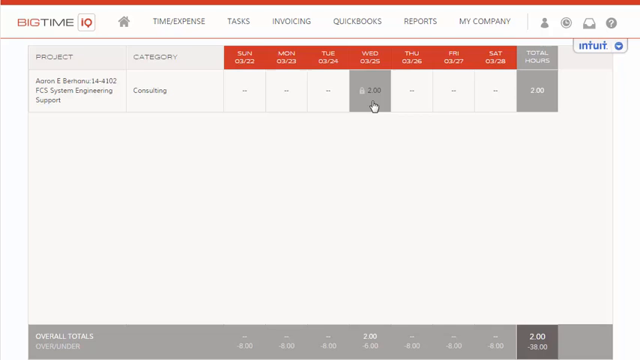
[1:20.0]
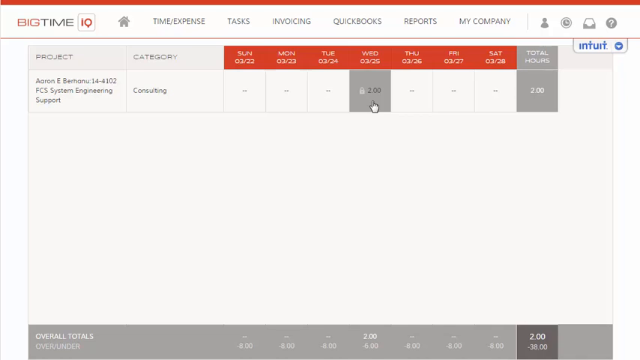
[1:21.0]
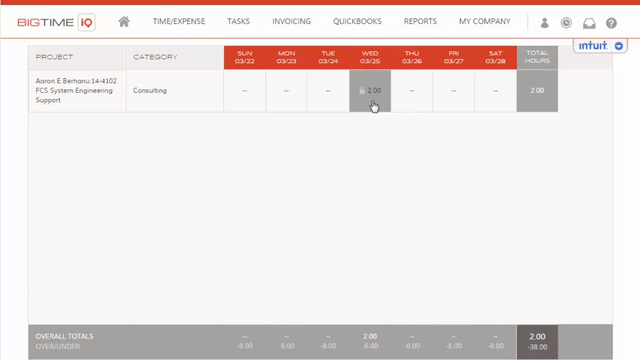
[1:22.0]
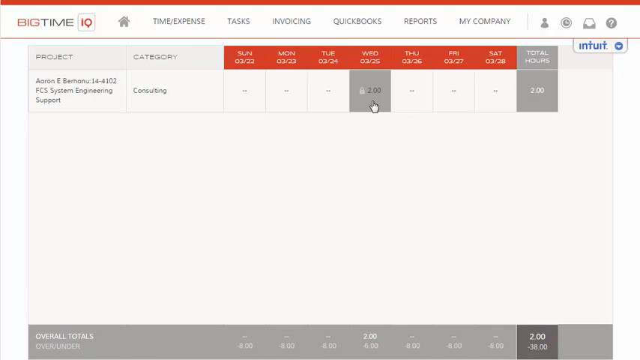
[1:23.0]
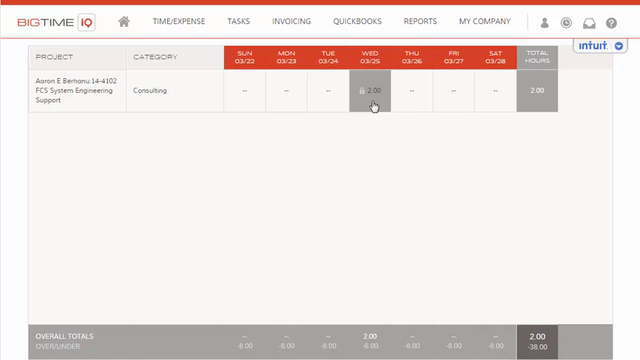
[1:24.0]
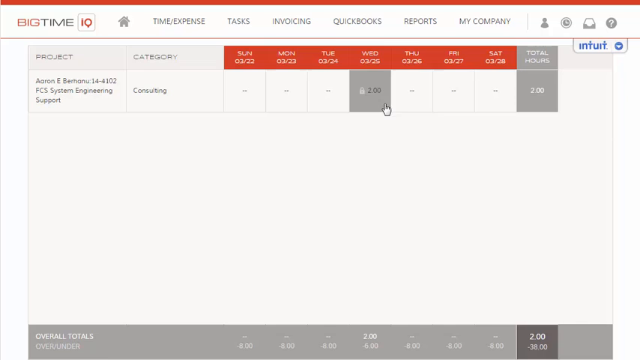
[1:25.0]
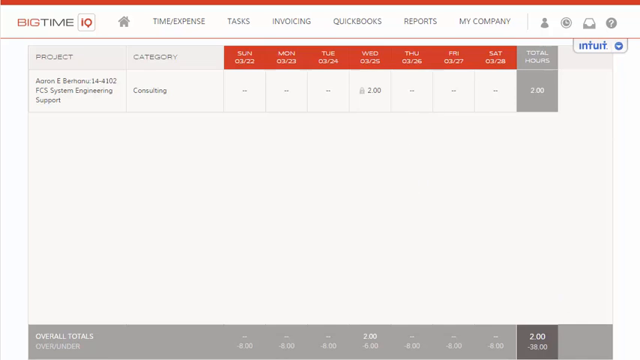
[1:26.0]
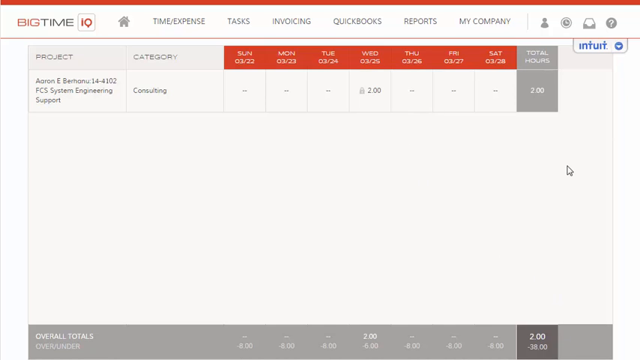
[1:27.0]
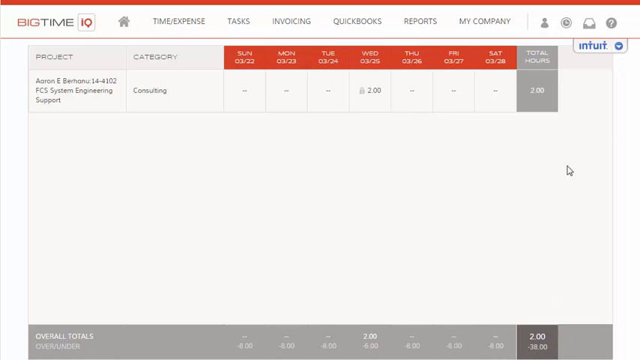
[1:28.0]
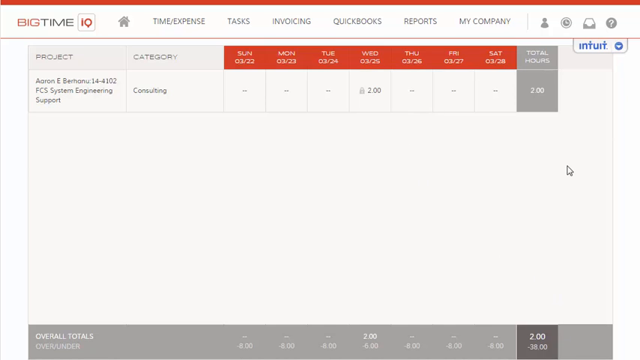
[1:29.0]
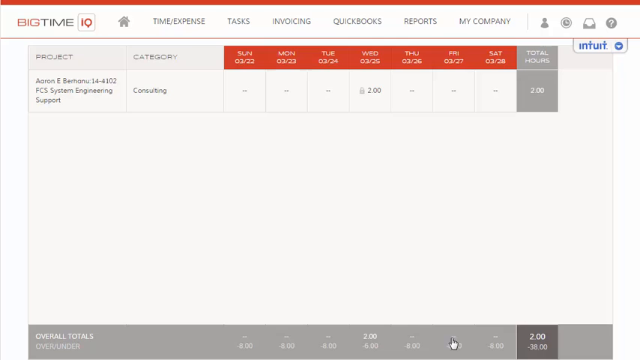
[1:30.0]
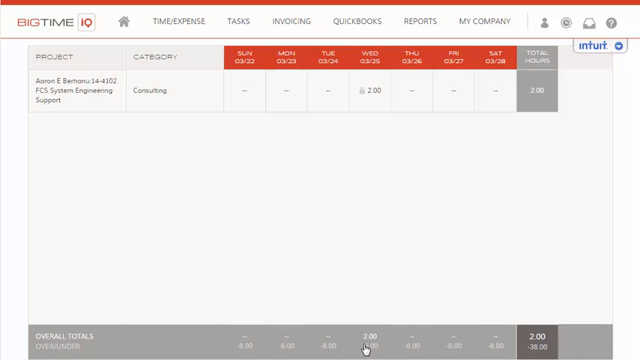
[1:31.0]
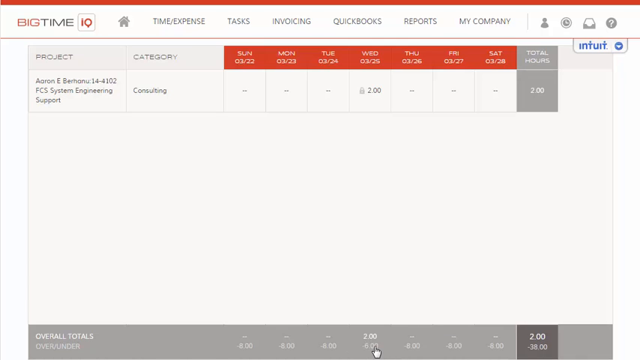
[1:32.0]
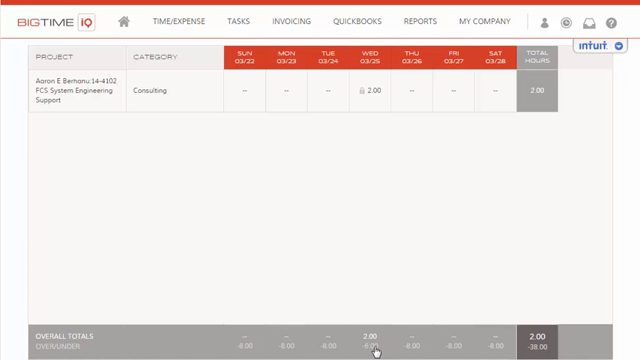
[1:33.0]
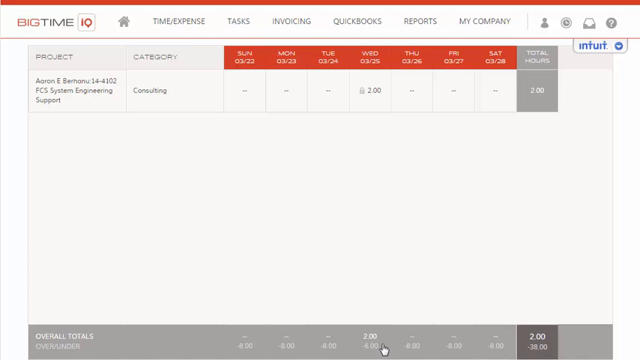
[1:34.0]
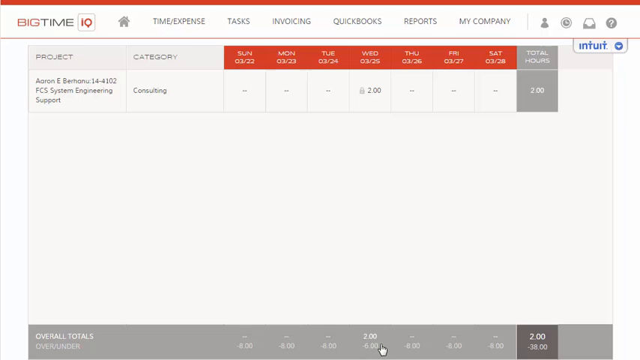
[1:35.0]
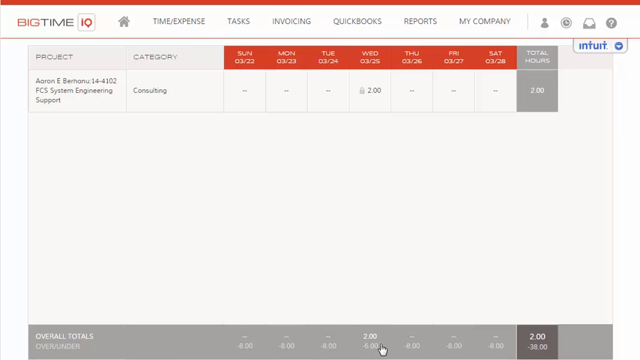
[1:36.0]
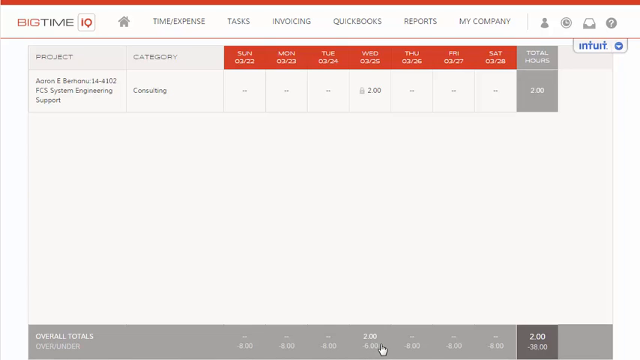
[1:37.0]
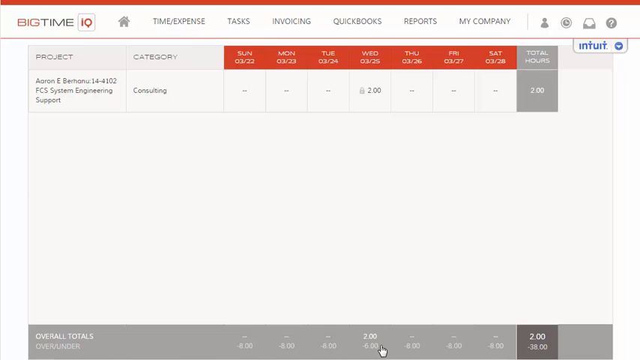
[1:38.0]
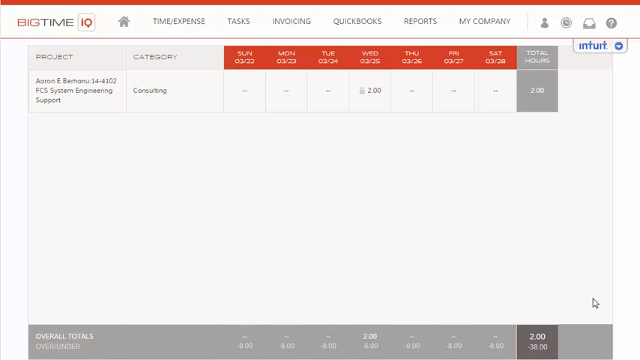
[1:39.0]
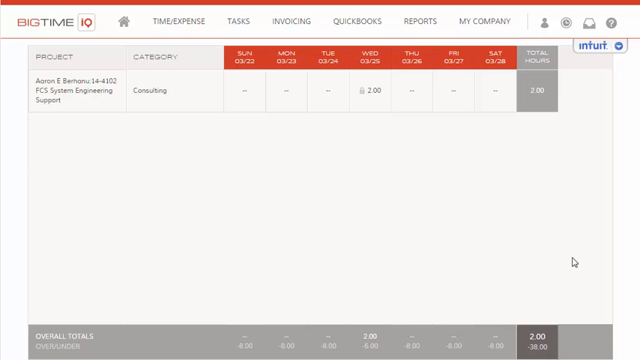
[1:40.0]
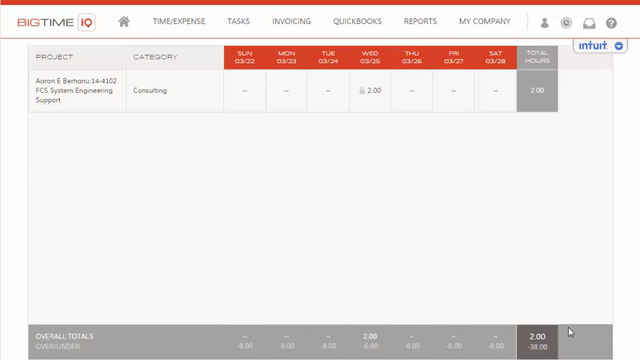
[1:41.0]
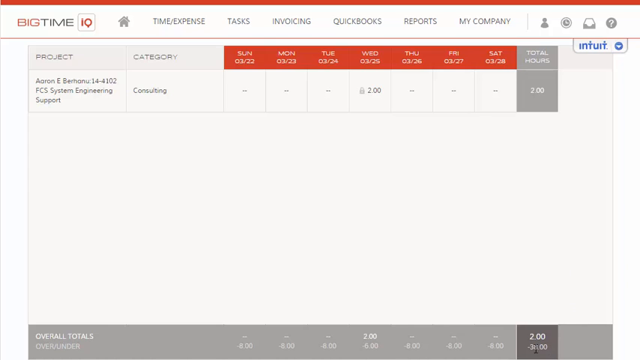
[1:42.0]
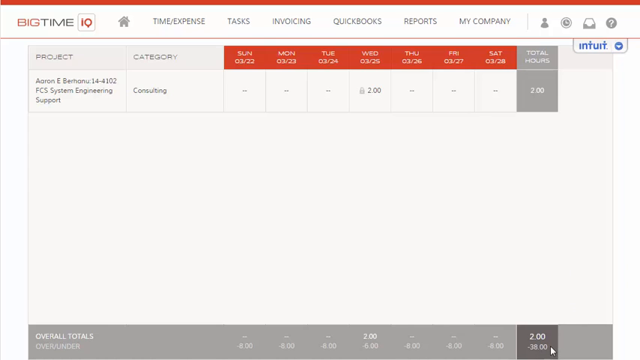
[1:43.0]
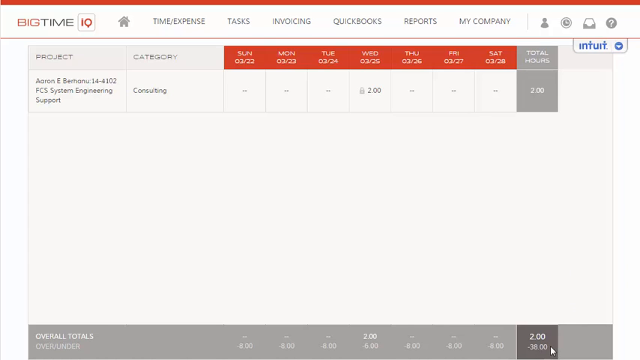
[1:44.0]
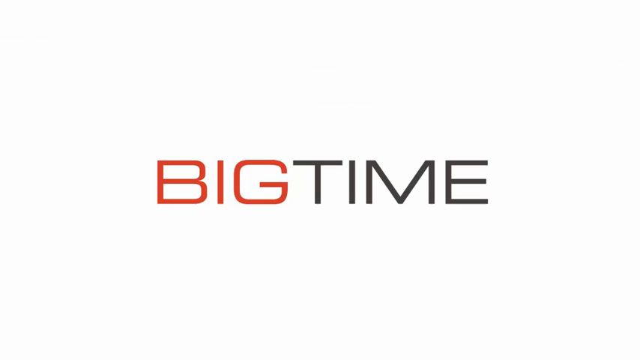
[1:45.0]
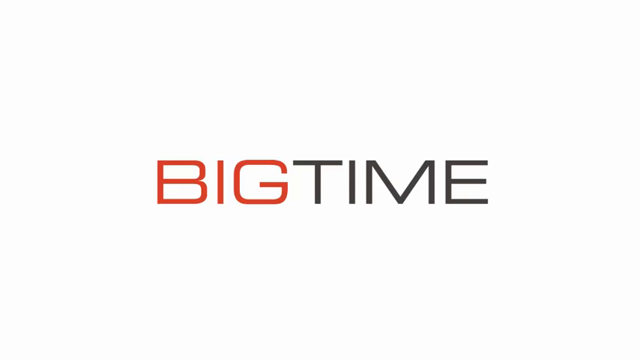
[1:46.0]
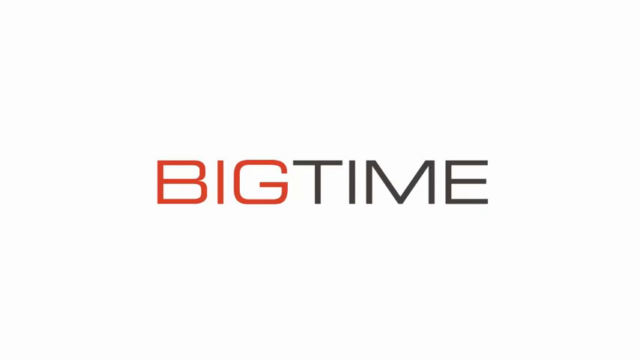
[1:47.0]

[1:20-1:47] The timesheet with the entered time is still shown, with the mouse hovering over the entry to show it is locked, and then the mouse moves around somewhat. At the bottom of the timesheet is a gray area reading "overall total over bundler," followed by 0 hours, 0 hours, 0 hours, 2 hours, 0 hours, 0 hours, 0 hours, 2 hours, and then what looks like negative 38. The bottom area is gray with white font. At the top of the spreadsheet, right by total hours, it says "into it," which looks clickable. The video ends with the screen turning white and the words "BIG TIME" in all capital letters, with "Big" in red and "Time" in black.